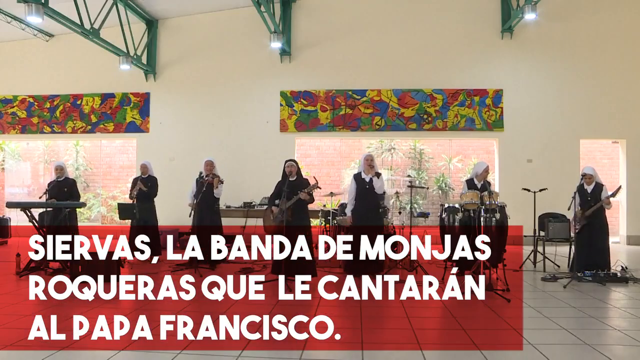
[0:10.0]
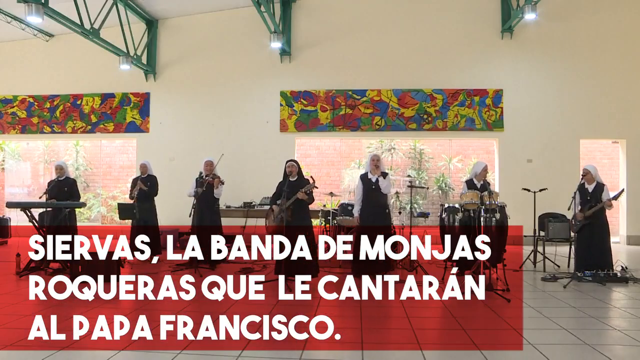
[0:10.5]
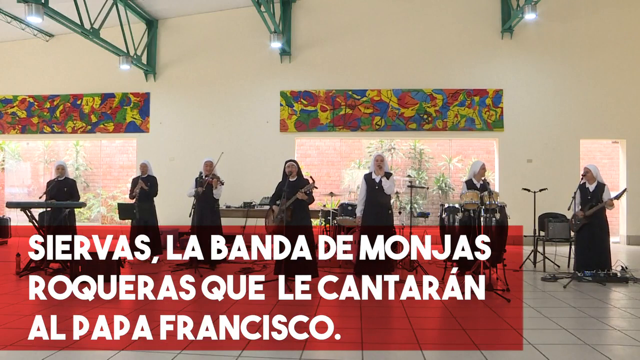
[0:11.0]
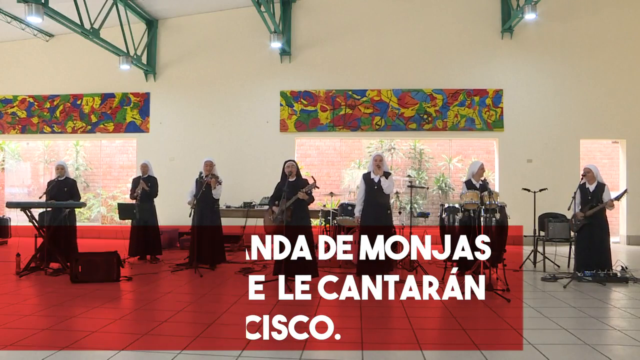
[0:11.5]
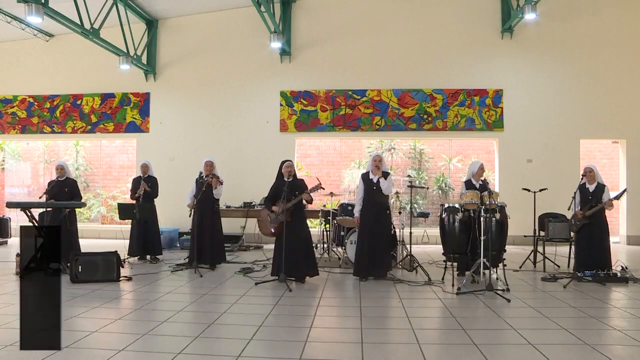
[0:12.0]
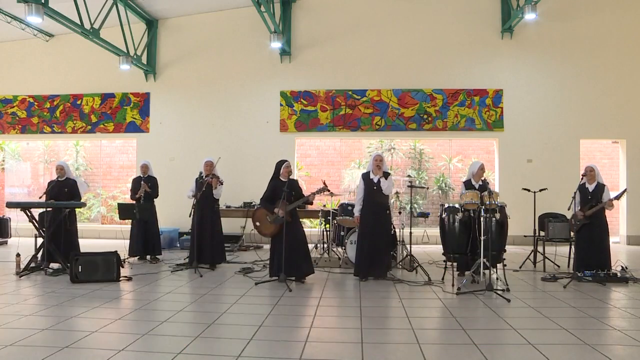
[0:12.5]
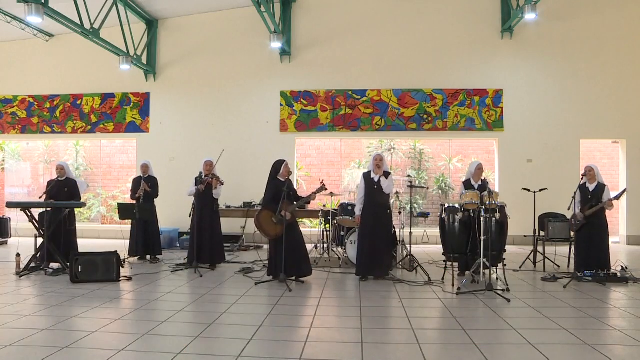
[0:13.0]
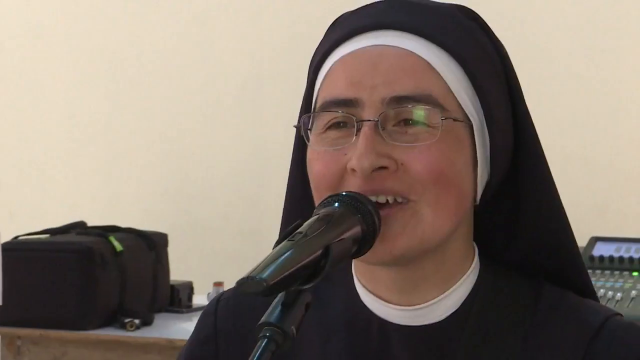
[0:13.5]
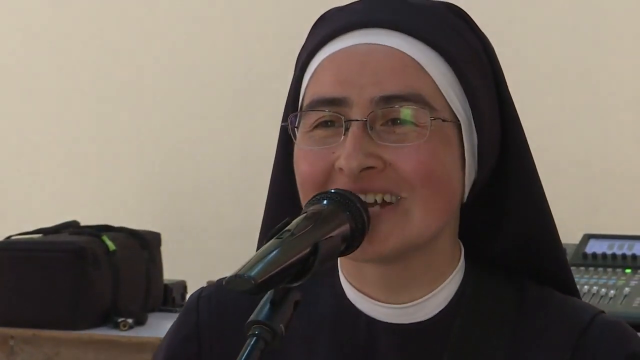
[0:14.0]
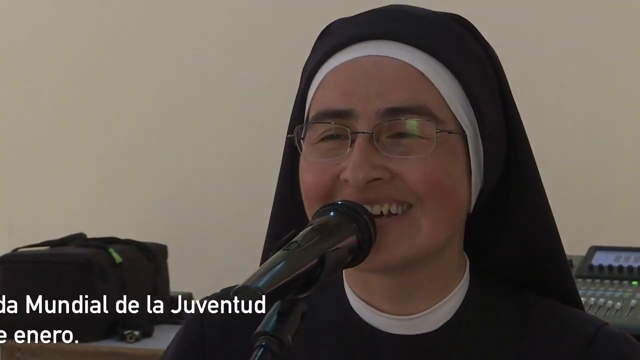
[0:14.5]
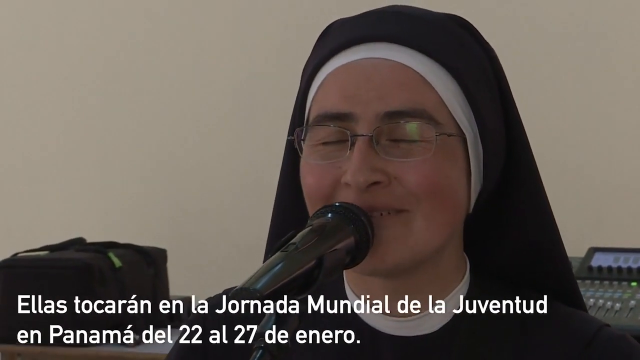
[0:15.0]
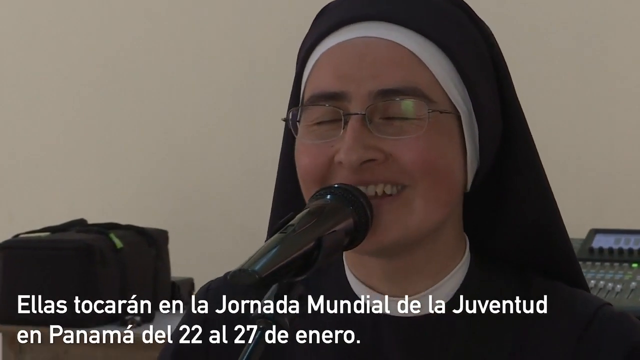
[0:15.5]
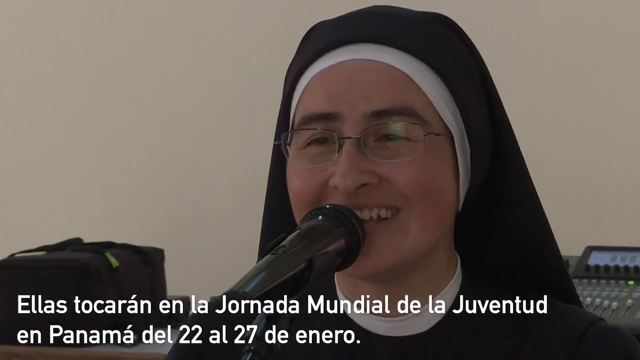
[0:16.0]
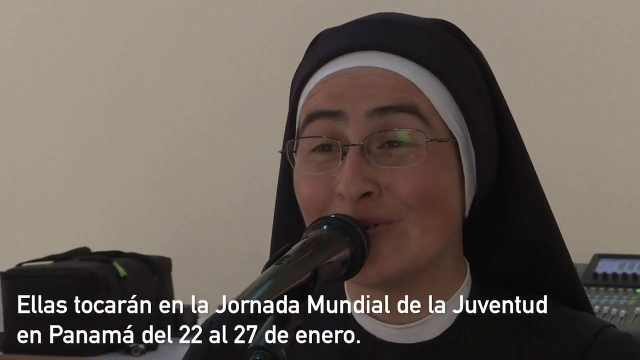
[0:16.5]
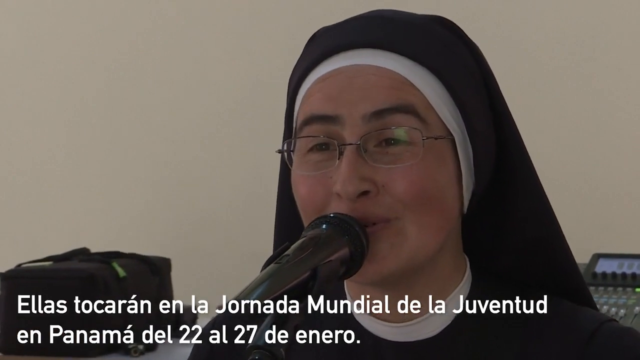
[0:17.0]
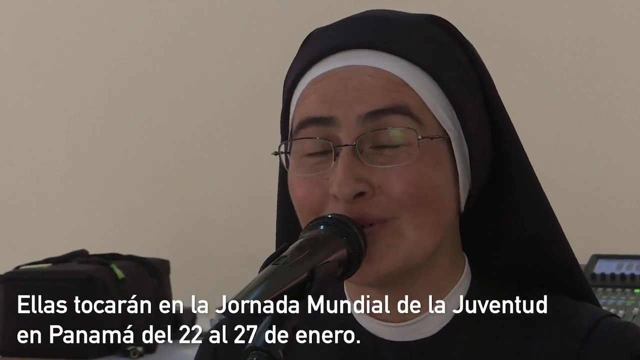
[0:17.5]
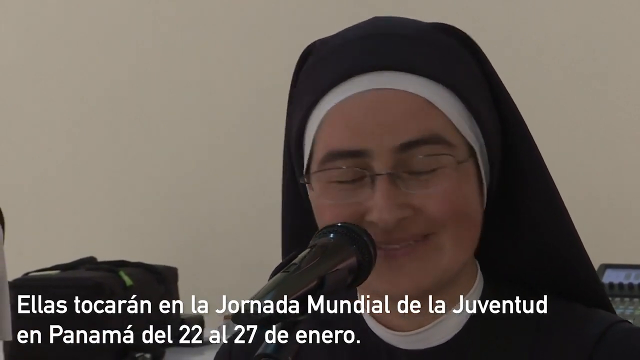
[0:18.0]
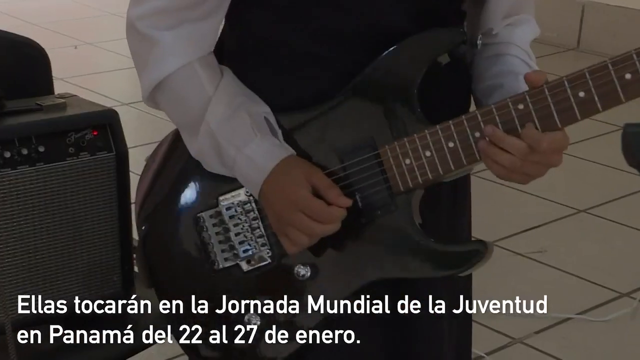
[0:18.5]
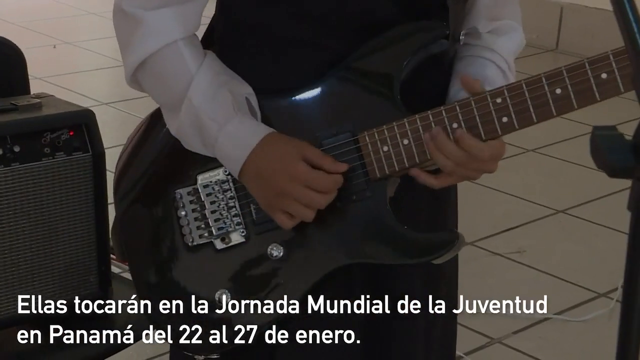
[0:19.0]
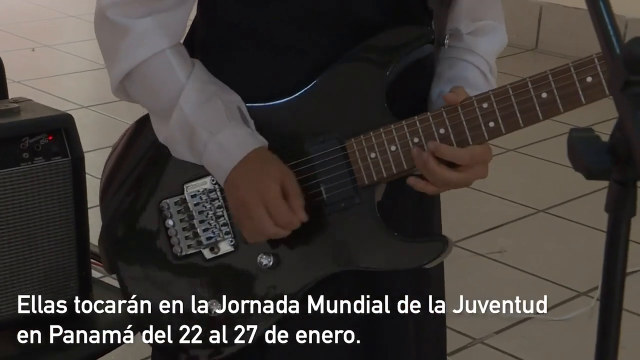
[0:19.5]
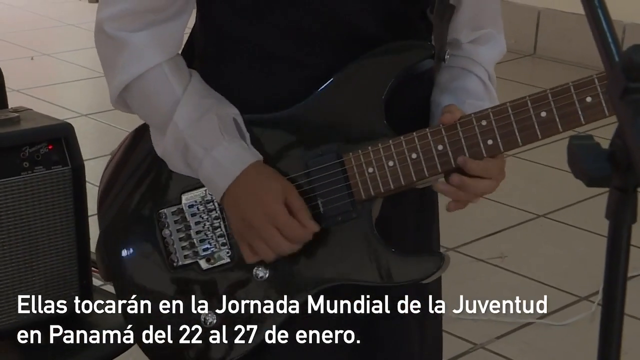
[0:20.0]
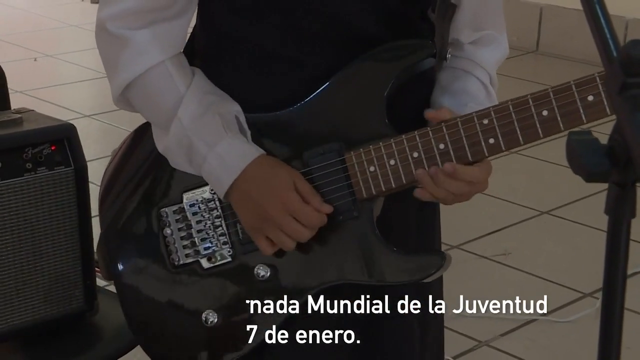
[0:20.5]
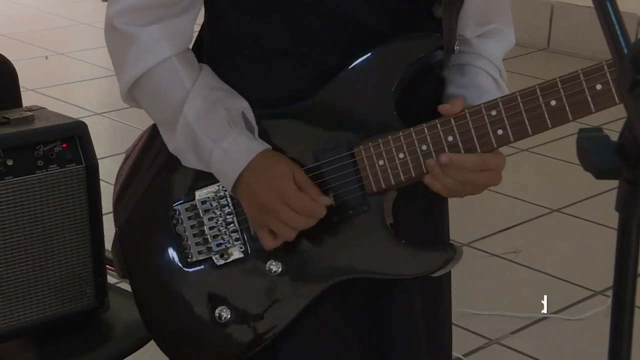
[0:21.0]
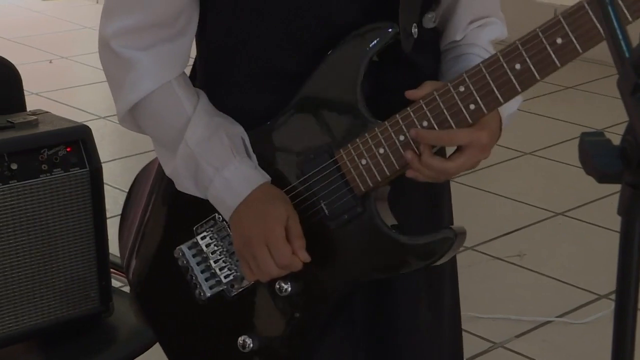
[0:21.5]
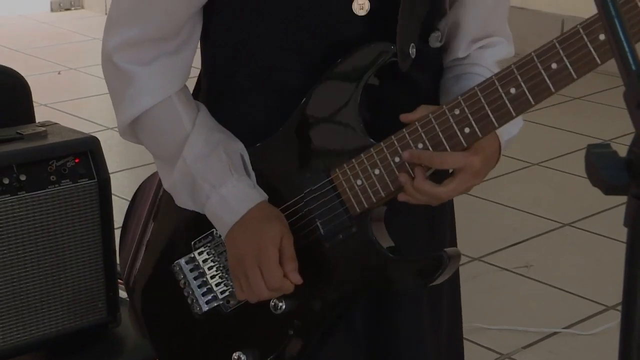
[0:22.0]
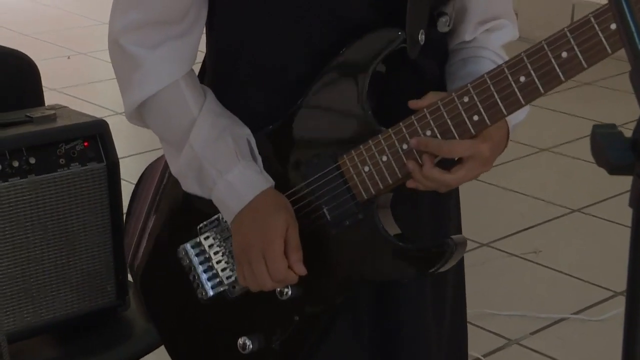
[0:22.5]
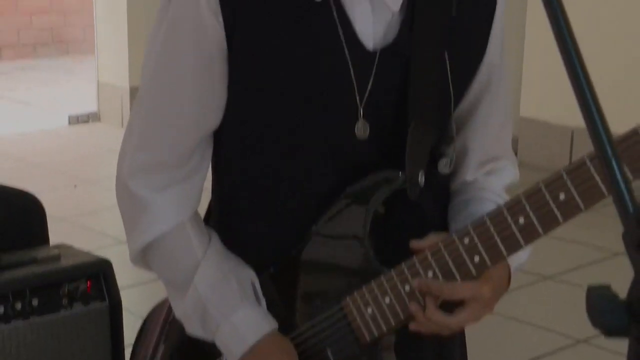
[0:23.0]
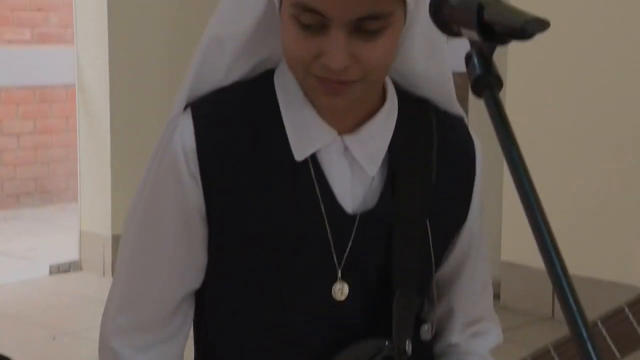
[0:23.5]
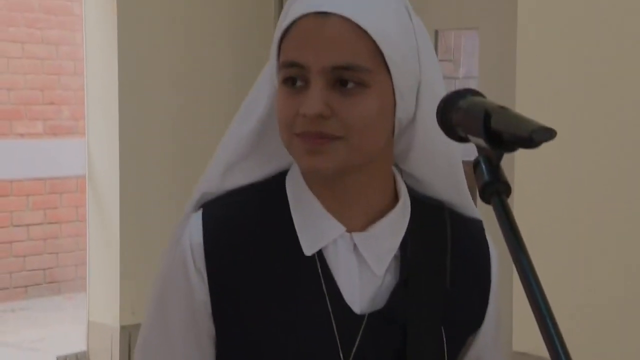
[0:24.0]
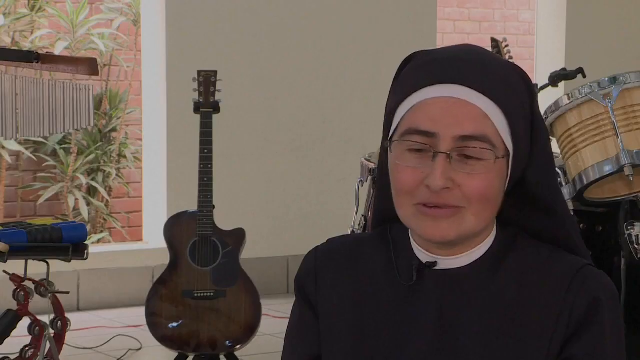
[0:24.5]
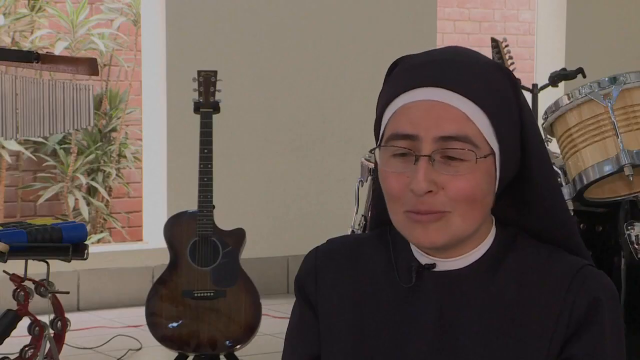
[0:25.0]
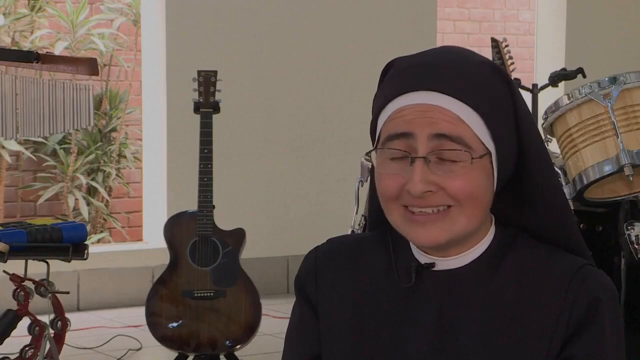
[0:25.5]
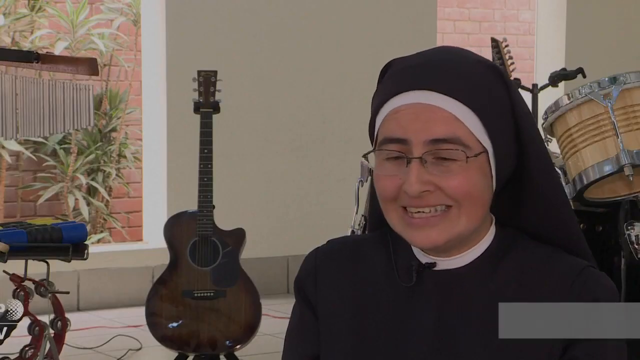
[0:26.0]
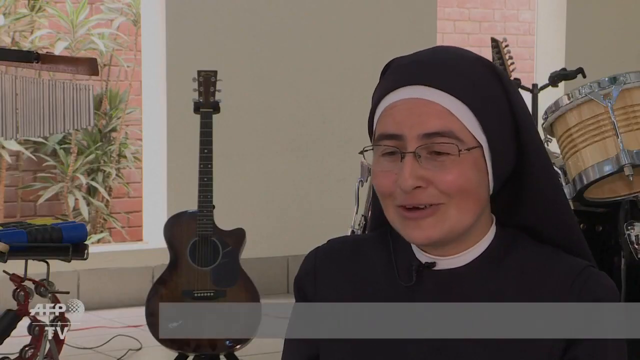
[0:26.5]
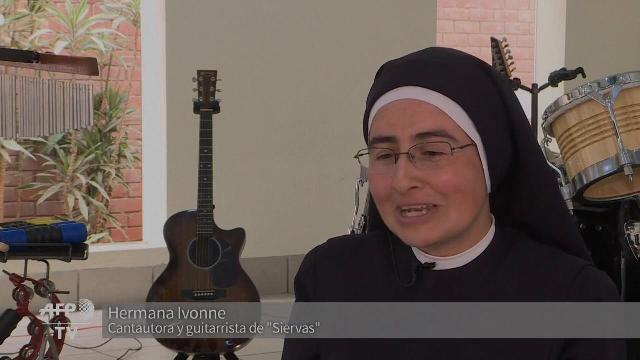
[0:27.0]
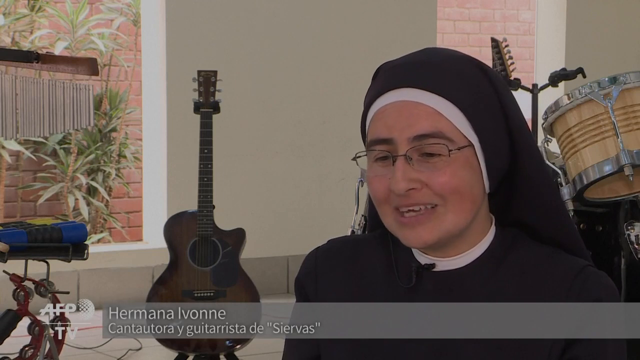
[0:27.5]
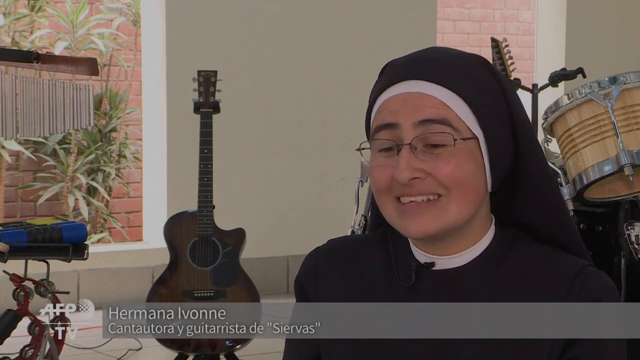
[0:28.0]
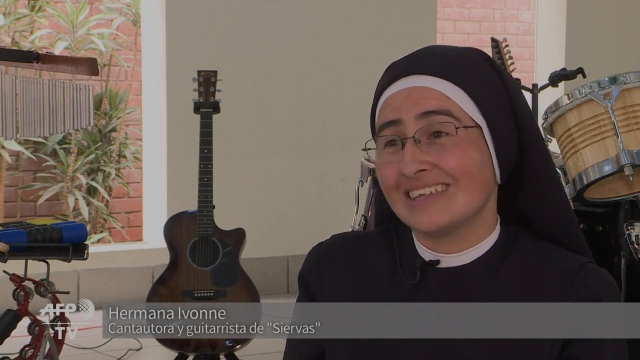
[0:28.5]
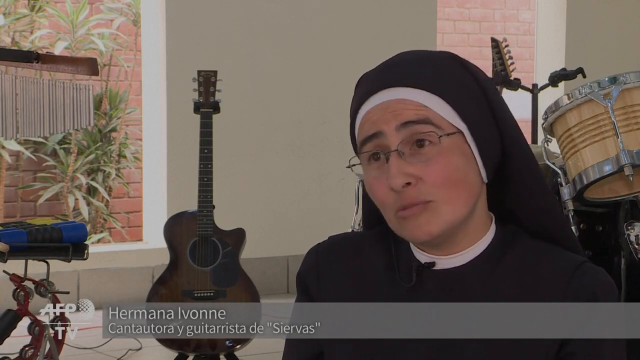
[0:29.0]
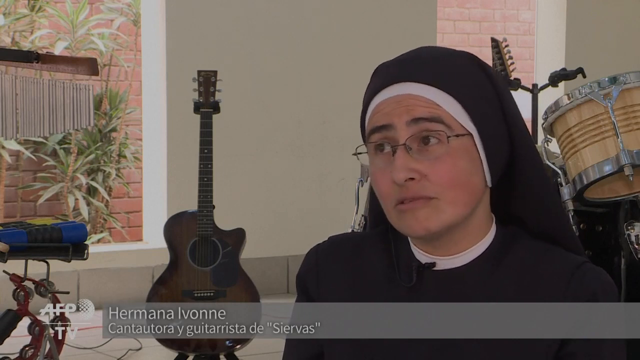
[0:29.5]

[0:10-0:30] Seven nuns in black and white dresses stand on stage. From left to right: a nun using a keyboard, a nun holding a microphone to her face, a nun with a violin, a nun with a guitar, another nun holding a microphone to her face, a nun using a drum set, and a nun with a guitar. A red text box in the lower left corner reads, in white text, "Siervas, La Banda De Monjas Roqueras Que Le Cantaran Al Para Francisco," then disappears. A close-up shows a nun with glasses smiling as she sings into a black microphone in front of her face, with electronic musical equipment in the background and a white wall behind her. White text slides in from the left at the bottom of the frame, beginning "Ellas tocaran en la" and continuing "Mundial de la Juventud en Panama del 22 al 27 de enero." A nun plays a guitar facing to the right, holding the neck with her left hand and strumming the strings with her right, tilting the guitar up and to the right as she plays. The camera pans up to reveal she wears a necklace, and she looks to her left toward the left side of the frame. A close-up then shows the nun with glasses speaking to the viewer, with a drum set in the background on the right and a guitar leaning against the white wall on the left. She shakes her head and smiles, raising her eyebrows as she speaks. A gray text box slides in from the right at the bottom, reading "Hermana Ivonne" and beneath it "Cantautora y guitarrista de "Siervas"", with "AFP TV" in white text to its left.